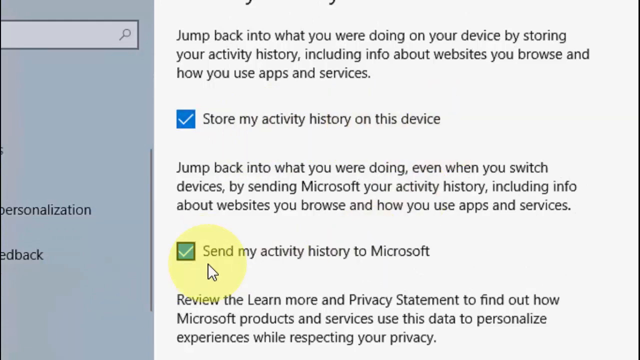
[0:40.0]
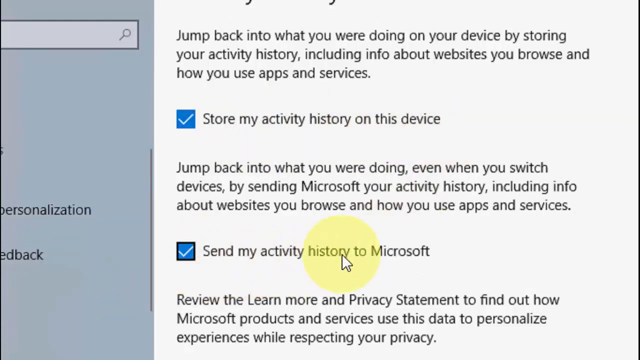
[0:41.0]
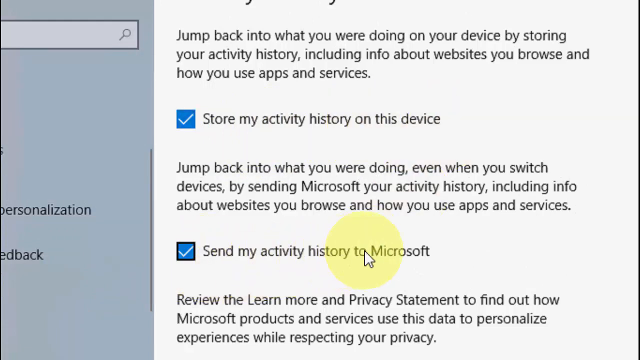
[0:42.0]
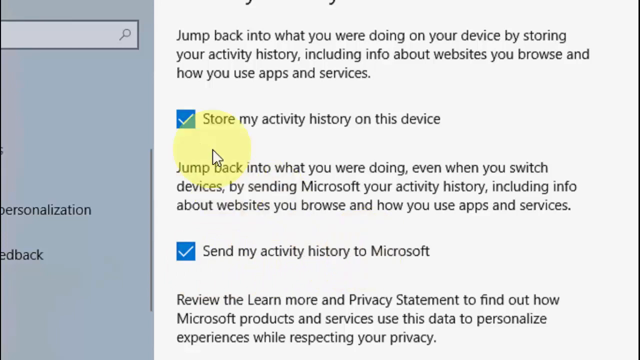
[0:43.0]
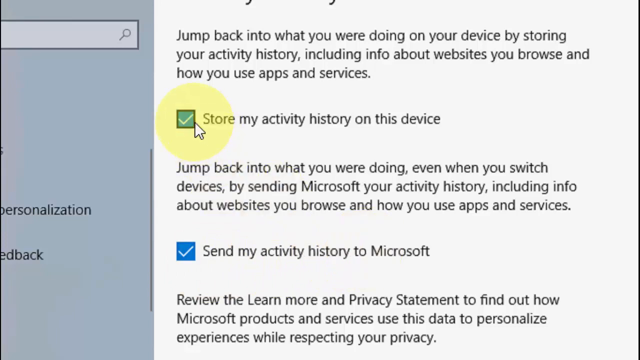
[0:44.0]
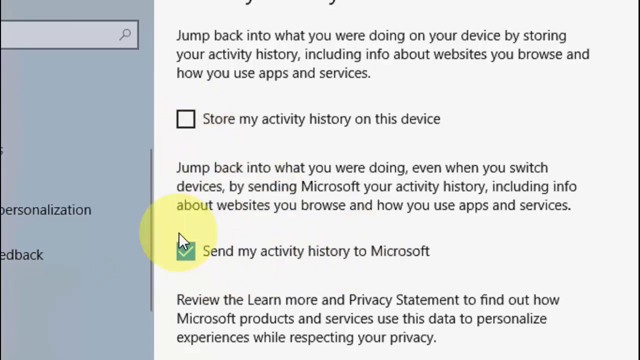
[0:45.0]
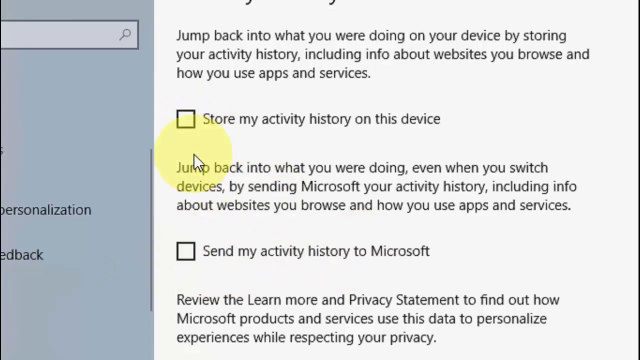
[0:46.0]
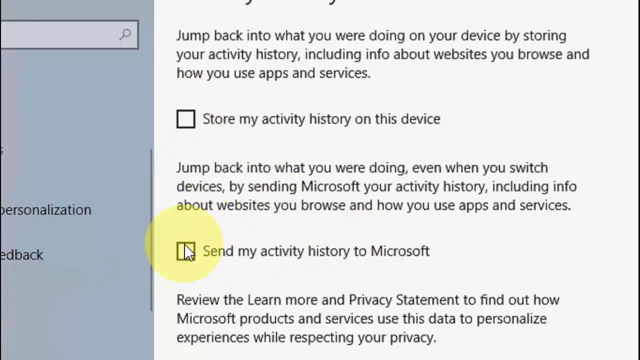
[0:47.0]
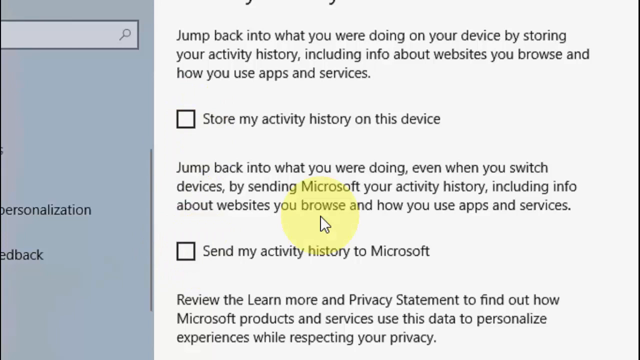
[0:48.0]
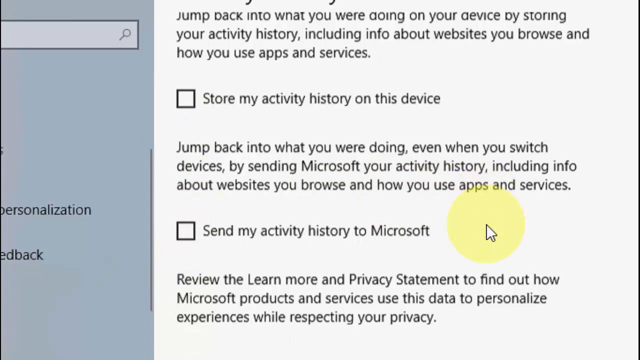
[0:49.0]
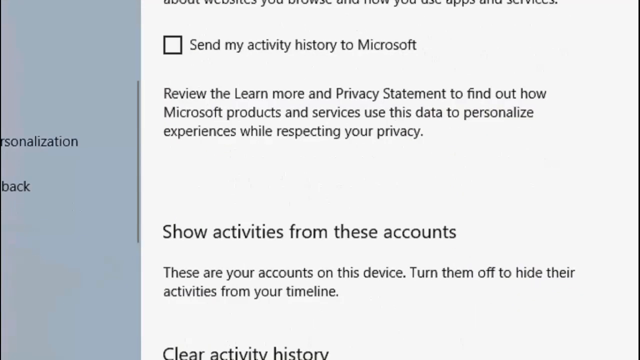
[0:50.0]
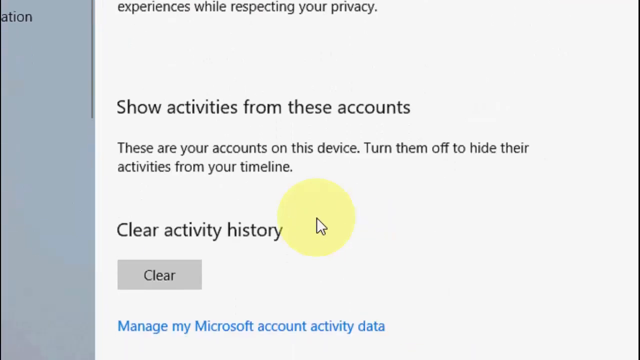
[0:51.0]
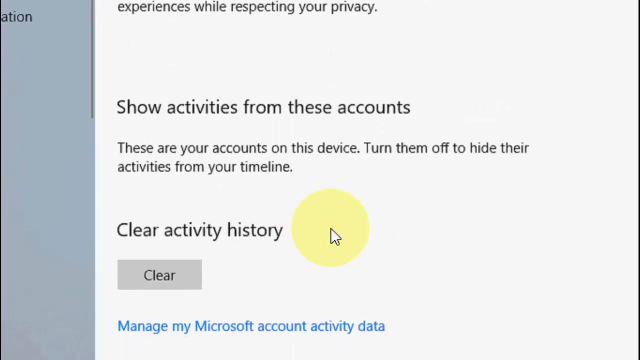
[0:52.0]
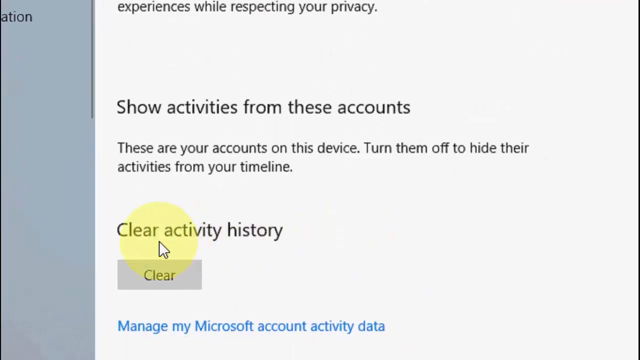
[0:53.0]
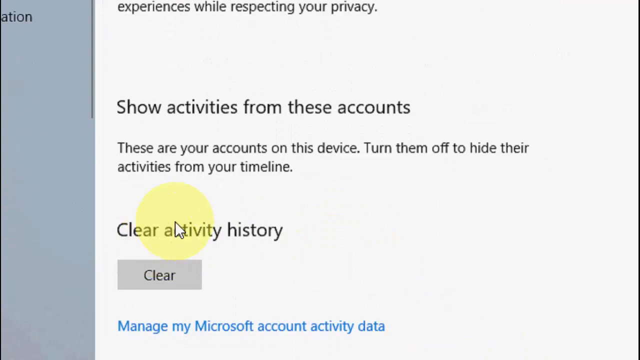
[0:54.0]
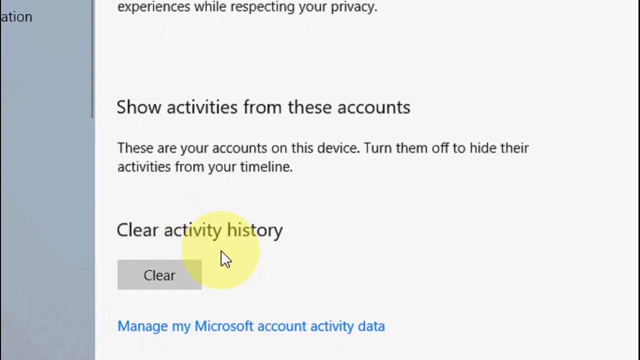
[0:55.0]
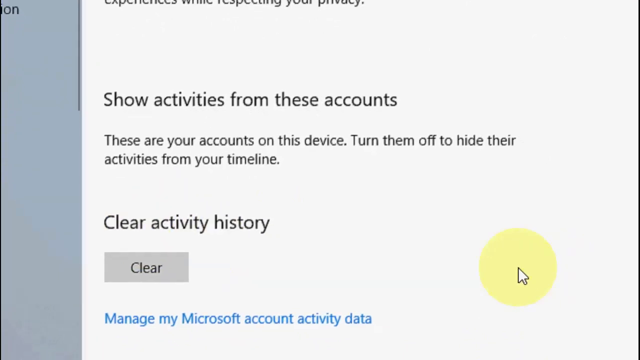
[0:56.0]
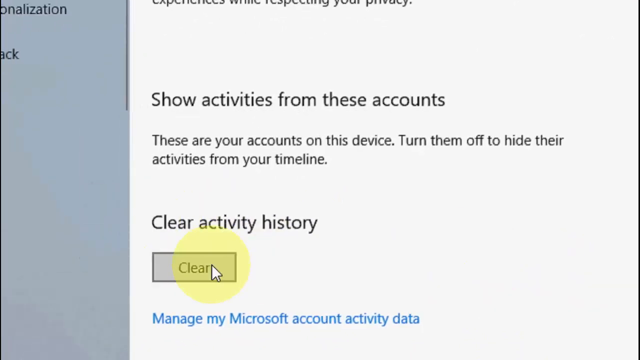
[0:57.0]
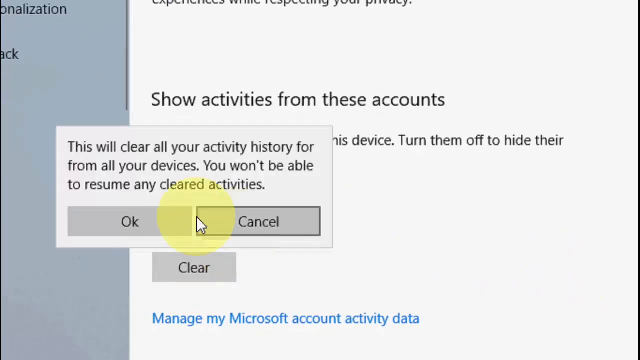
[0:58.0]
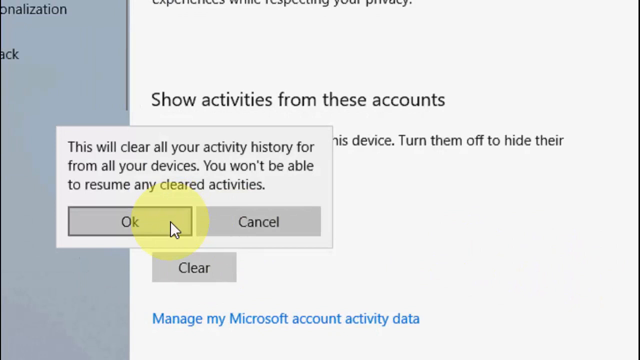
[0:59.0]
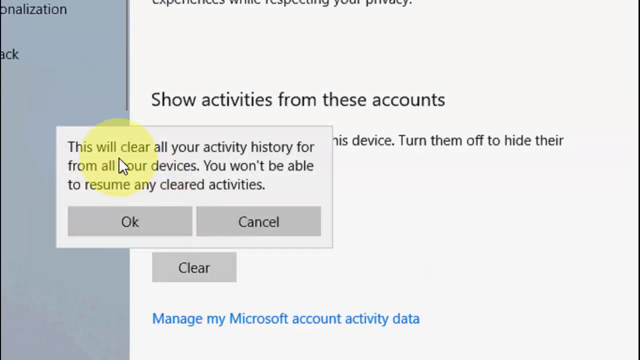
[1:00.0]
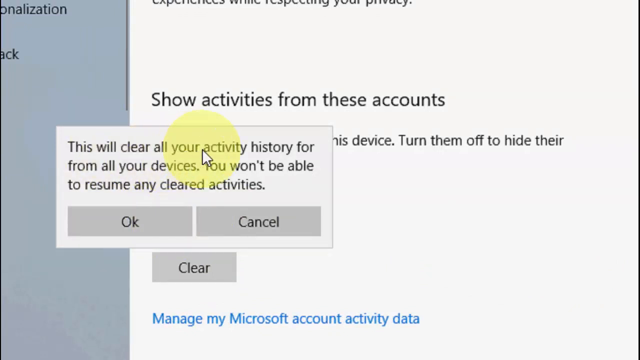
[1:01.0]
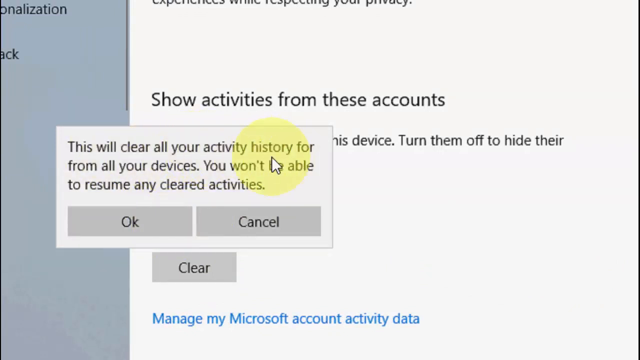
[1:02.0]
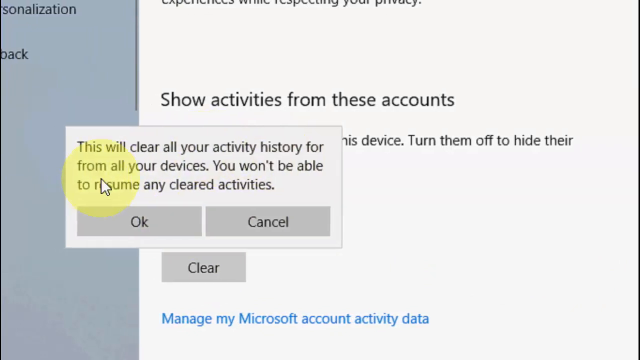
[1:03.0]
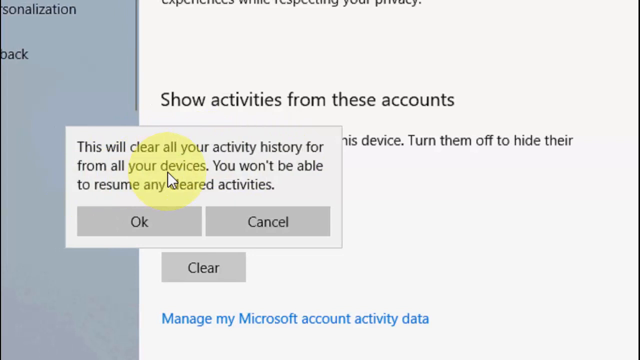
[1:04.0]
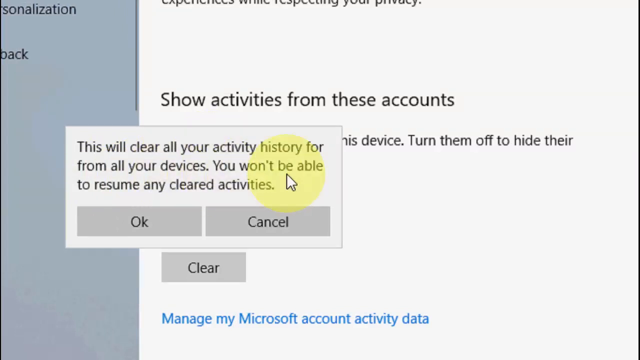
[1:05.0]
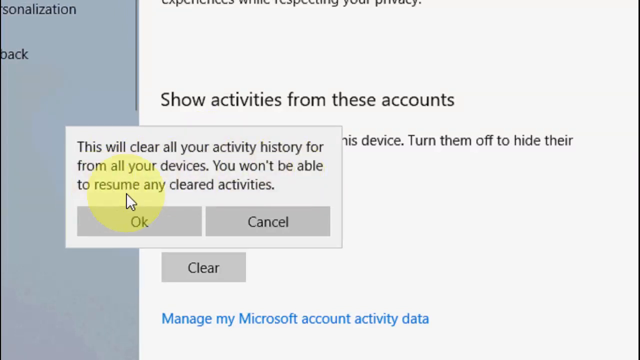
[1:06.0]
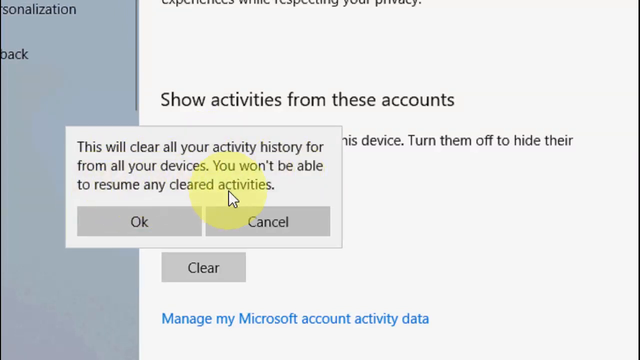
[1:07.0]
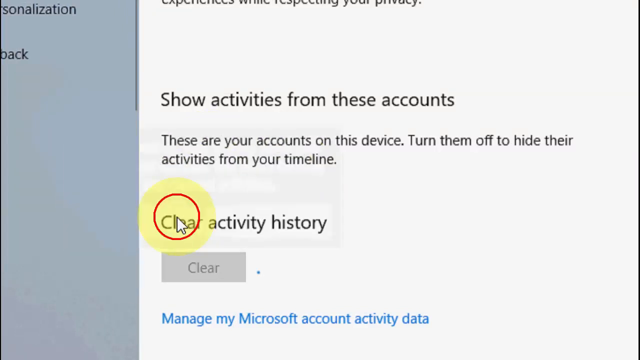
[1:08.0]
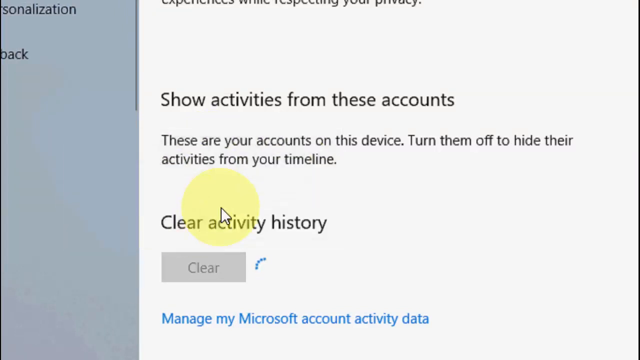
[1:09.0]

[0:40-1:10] A partial view of a computer screen shows two options. The first says "Store my activity history on this device", with a blue box with a white check mark at the start of the line and three lines of text right underneath. A second section, also with a blue box with a white check mark, says "Send my activity history to Microsoft". A cursor with a yellow highlight around it is next to that second line. The cursor moves along the line from left to right, stops at the word "to", then goes up to the line above and clicks the blue box; the check mark disappears and the box becomes white. The cursor then goes down and clicks the second blue box, which also turns white. It moves back and forth between the two unchecked boxes, stops at the bottom box and shifts to the right, then moves downward. The whole image scrolls down a few bars, revealing more of the page. The cursor goes down to a section that says "Clear activity history" and hovers over that line of text, going to it twice, before moving to a box underneath that says "clear". It clicks the box and a pop-up window appears with three lines of text: "This will clear all your activity history for from all your devices. You won't be able to resume any cleared activities." Below that are an OK button on the left and a Cancel button on the right. The cursor hovers over the OK button, runs along the line of text above it, and then clicks OK.